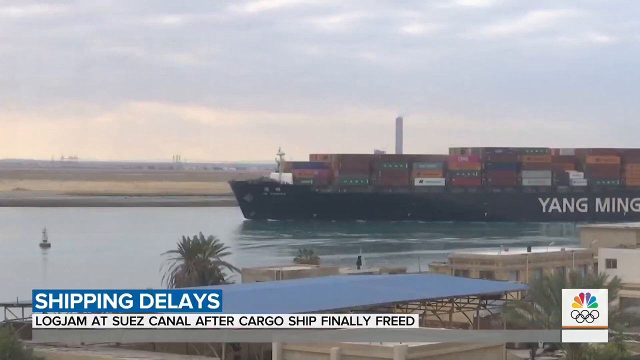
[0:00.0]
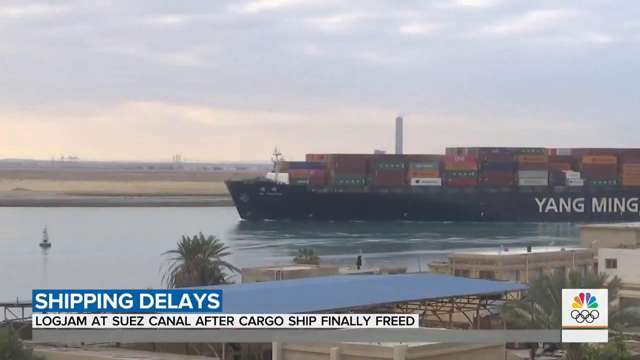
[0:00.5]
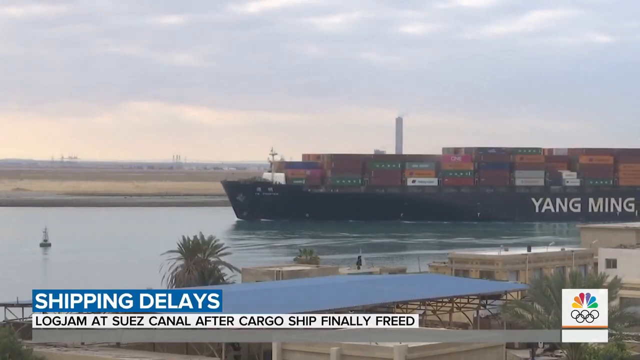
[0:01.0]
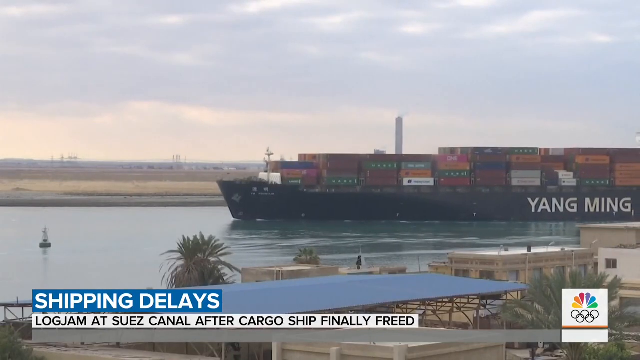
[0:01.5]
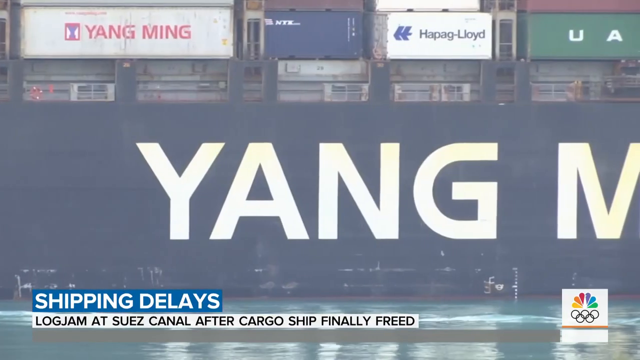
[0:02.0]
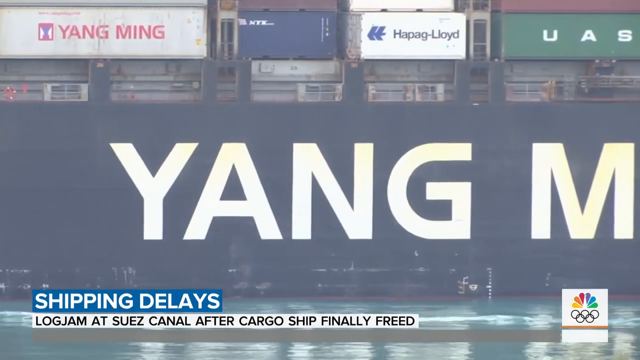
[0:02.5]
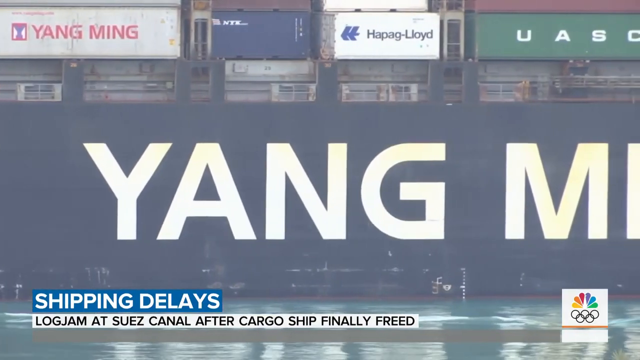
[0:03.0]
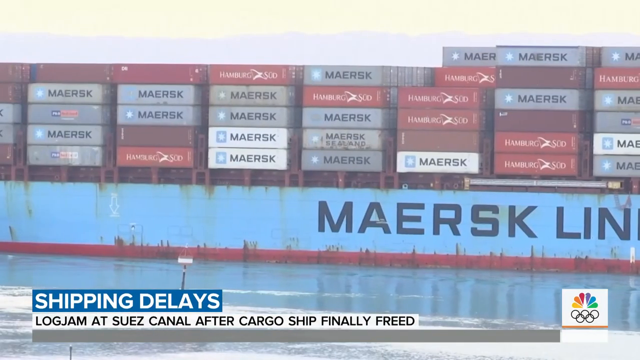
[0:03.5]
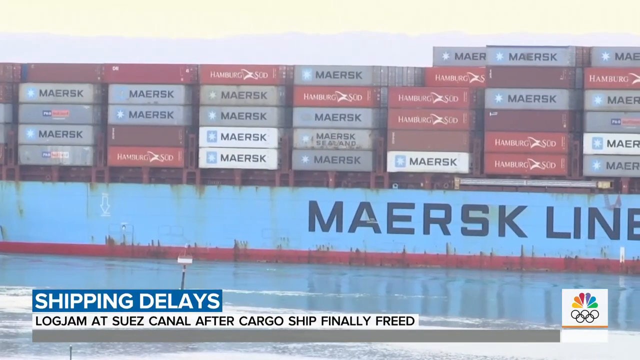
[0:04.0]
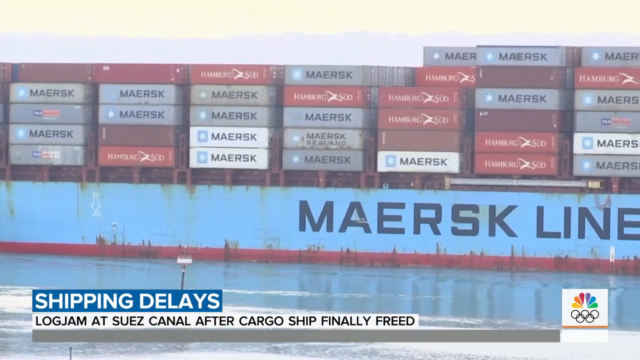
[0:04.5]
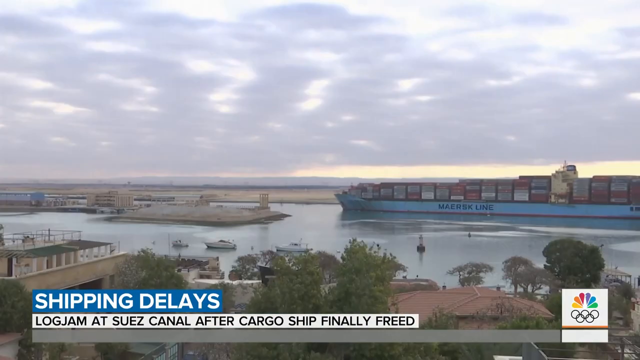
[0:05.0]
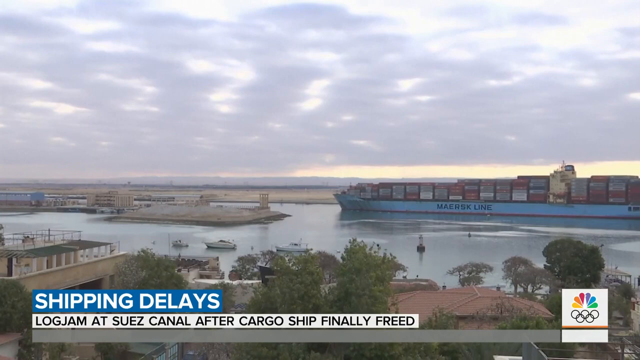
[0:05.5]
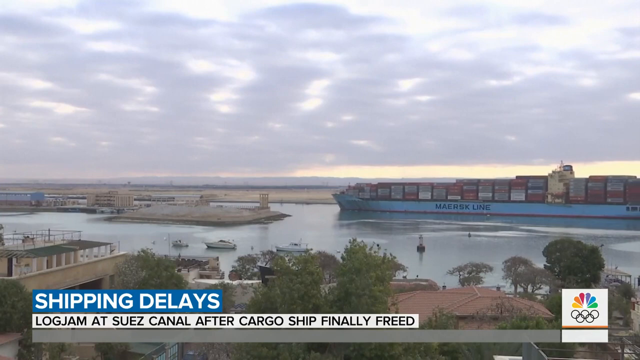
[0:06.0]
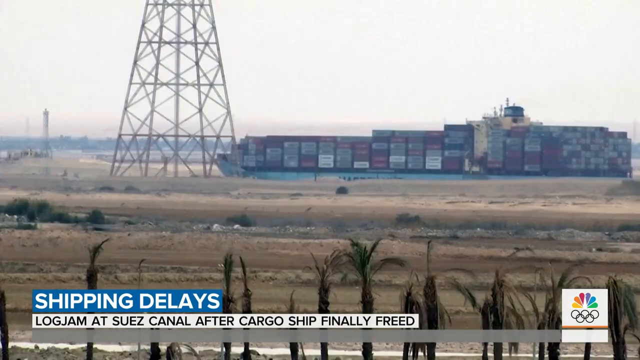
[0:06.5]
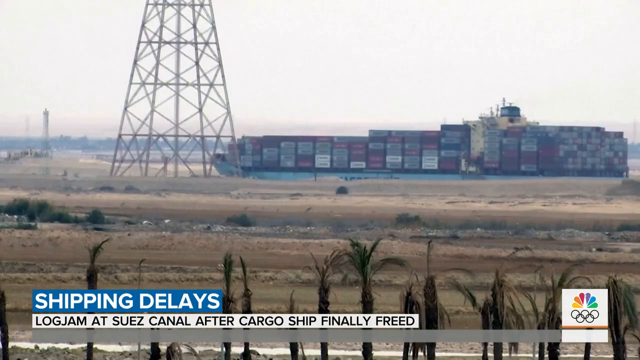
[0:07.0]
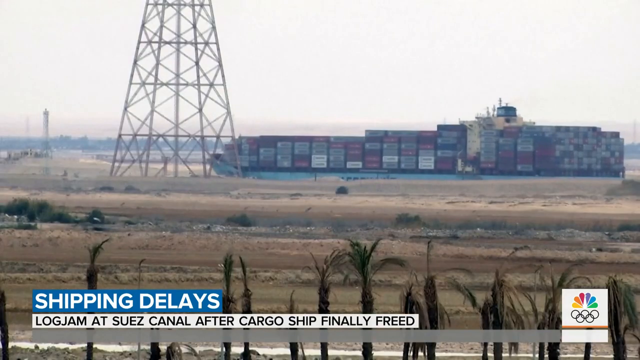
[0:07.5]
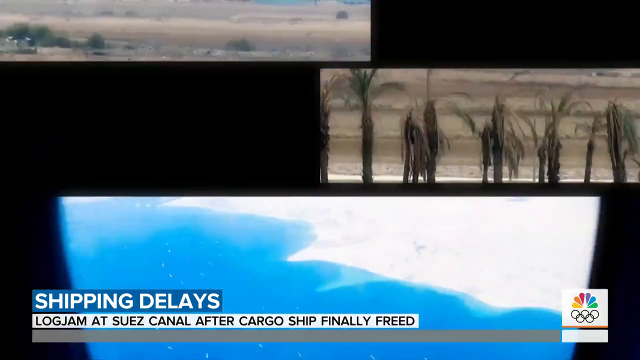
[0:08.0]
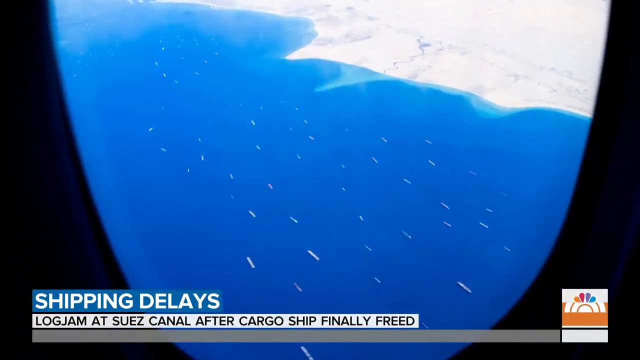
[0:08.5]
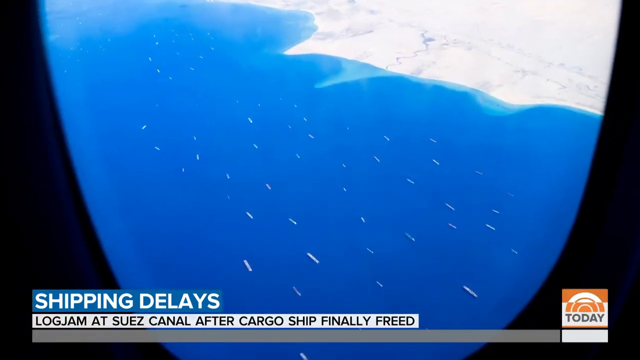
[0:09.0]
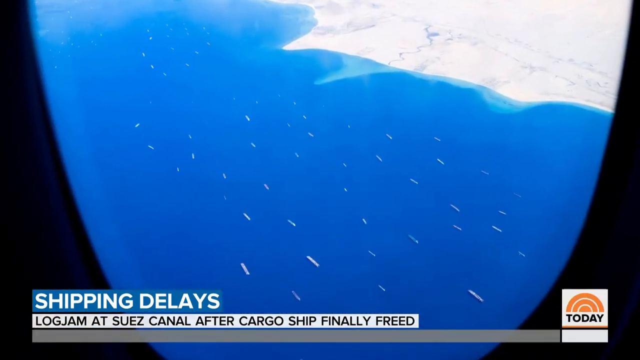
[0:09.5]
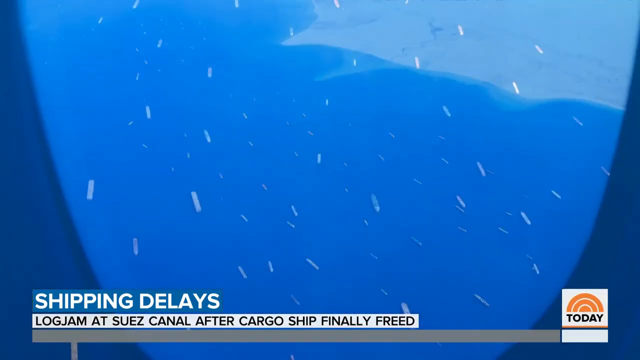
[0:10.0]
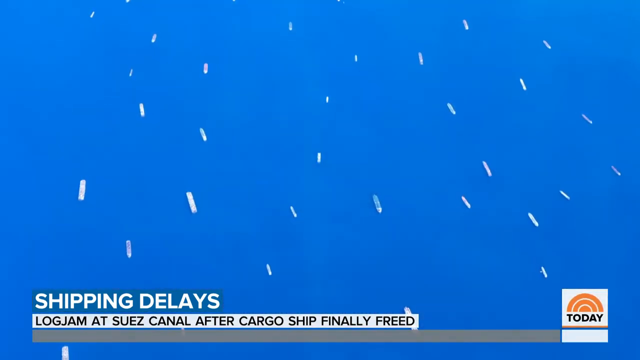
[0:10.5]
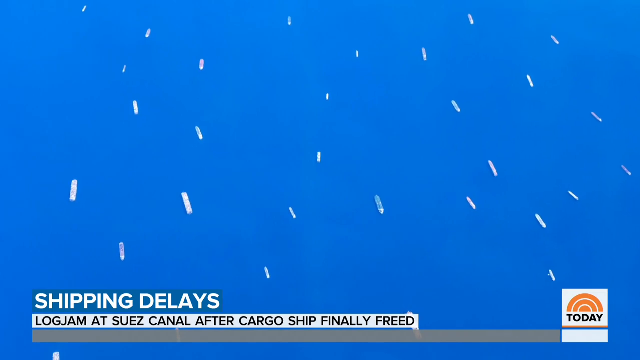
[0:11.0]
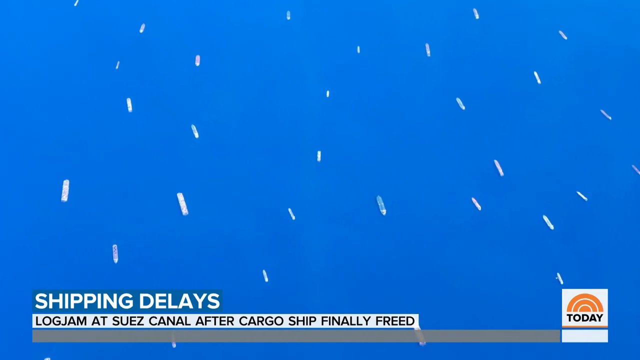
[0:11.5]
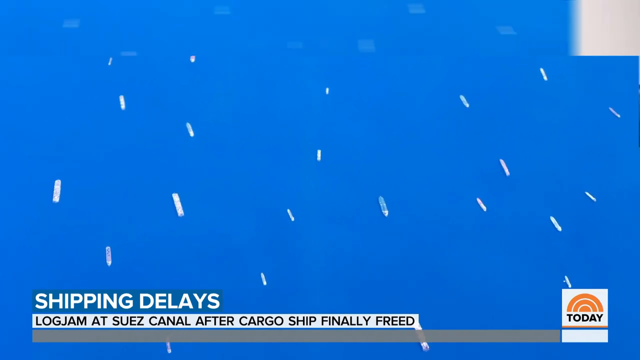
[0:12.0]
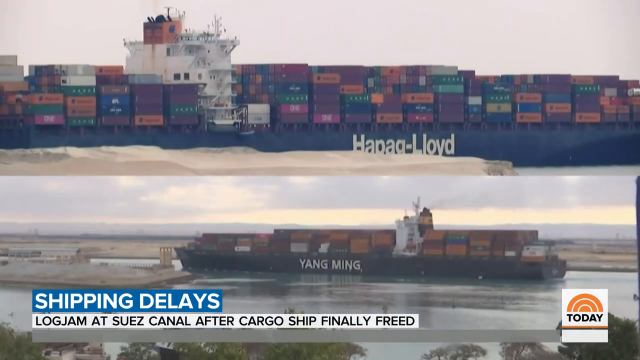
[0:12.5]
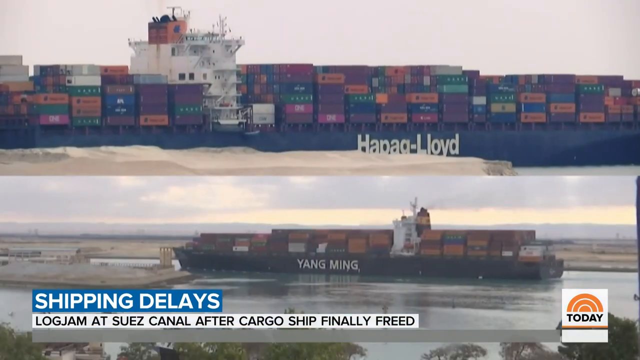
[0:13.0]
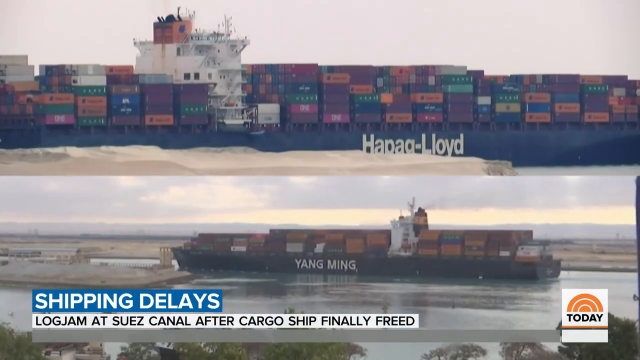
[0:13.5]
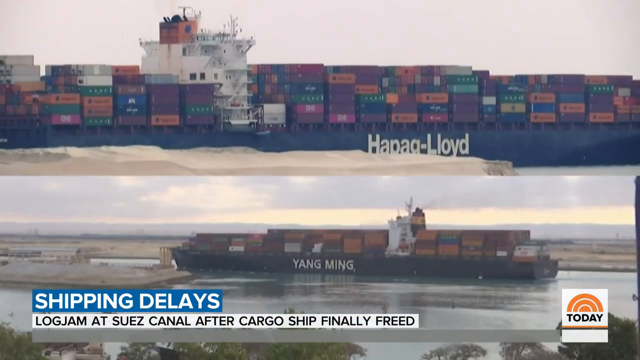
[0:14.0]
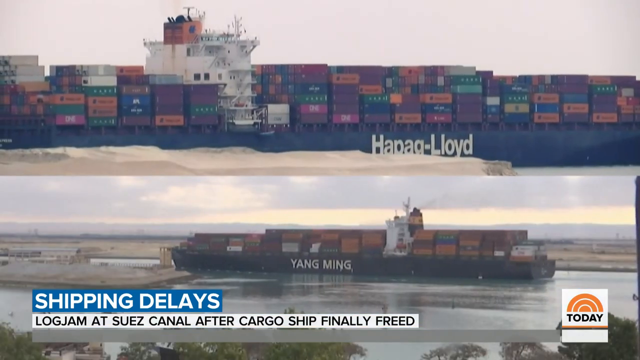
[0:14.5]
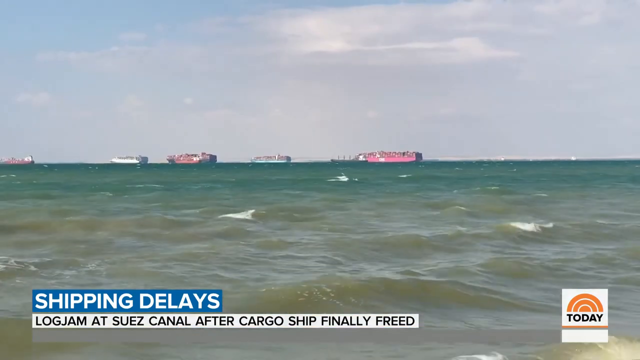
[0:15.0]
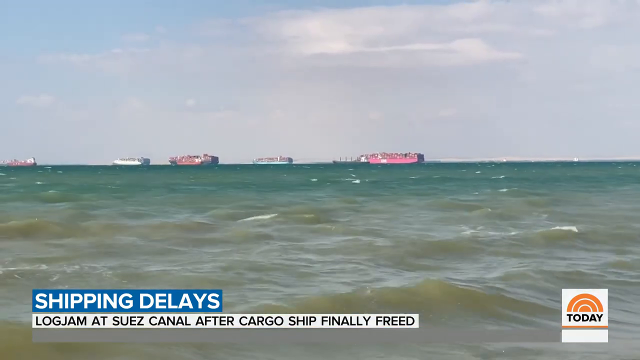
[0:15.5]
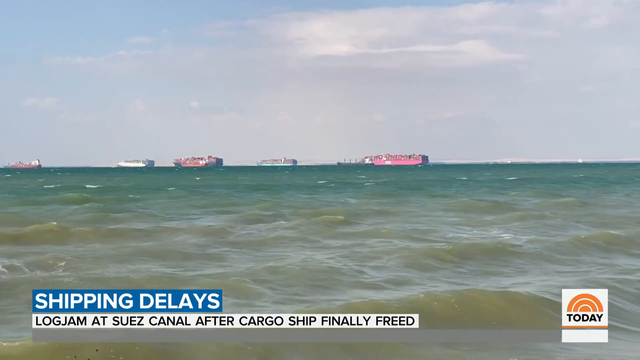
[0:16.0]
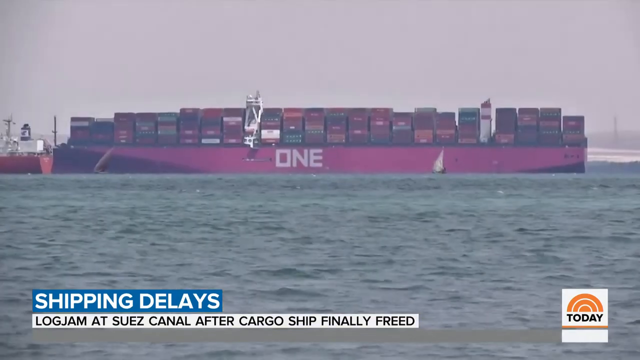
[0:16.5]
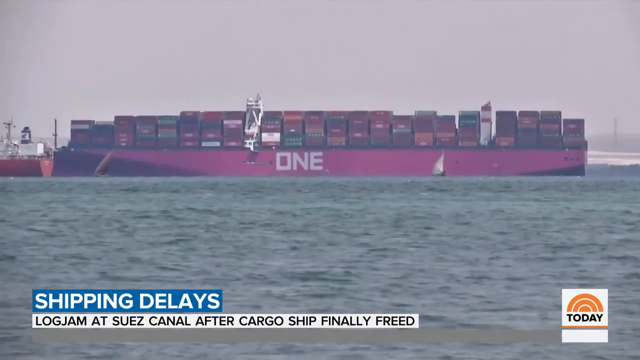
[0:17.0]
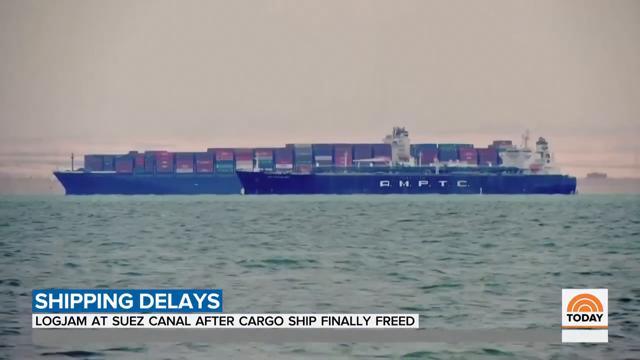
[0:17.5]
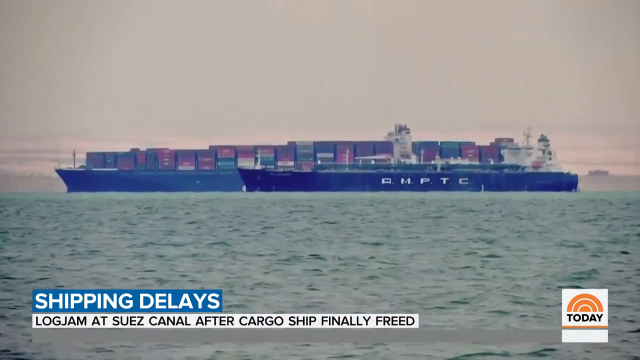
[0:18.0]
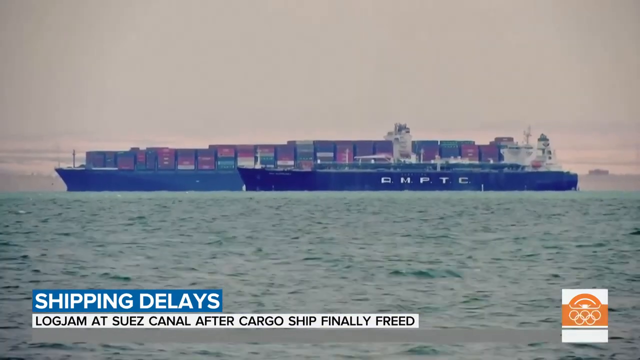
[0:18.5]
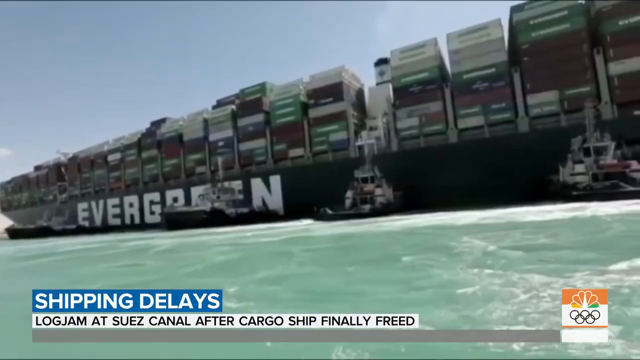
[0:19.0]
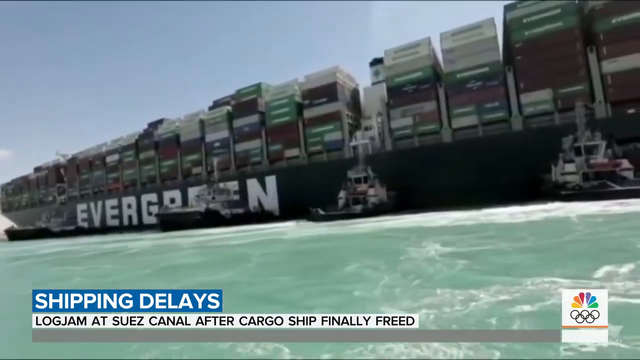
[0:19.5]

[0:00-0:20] A news clip shows a very large ship from a sideways perspective, slowly traveling to the left of the screen. The words "Yang Ming" are on the ship, and it is carrying lots of freight. Text below reads "shipping delays, log jam at Suez Canal after cargo ship finally freed," and an NBC News logo is in the bottom right corner of the screen. The view changes to one from outside a circular window of a plane, showing a very zoomed-out view of what looks like ships and water. Then the screen shows the same ship twice: in the top section it travels to the right, and in the bottom section it slowly moves to the left. The next scene shows the body of water from a beach point of view, with several ships in the water.